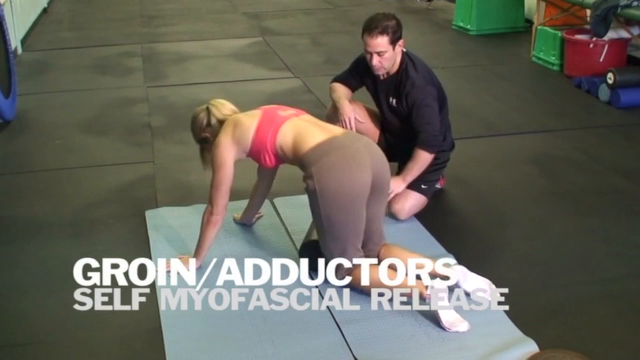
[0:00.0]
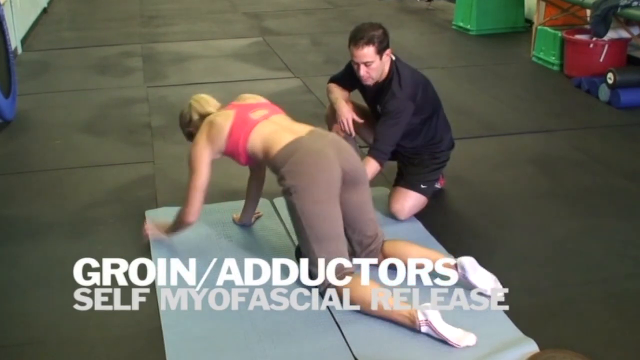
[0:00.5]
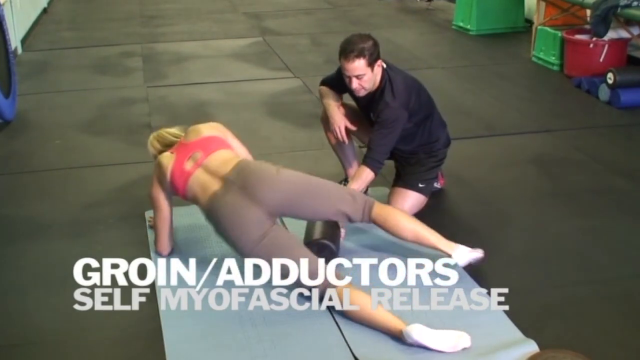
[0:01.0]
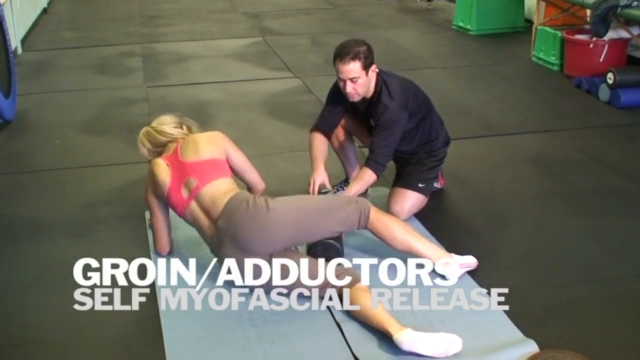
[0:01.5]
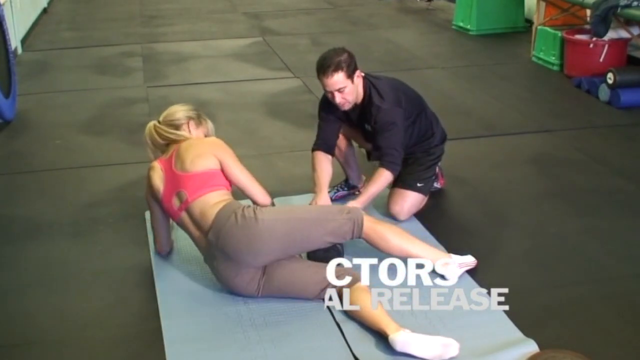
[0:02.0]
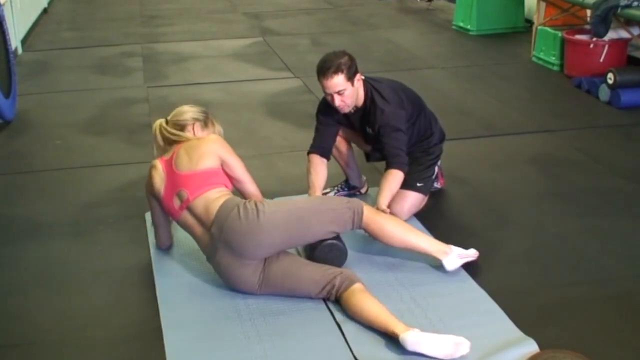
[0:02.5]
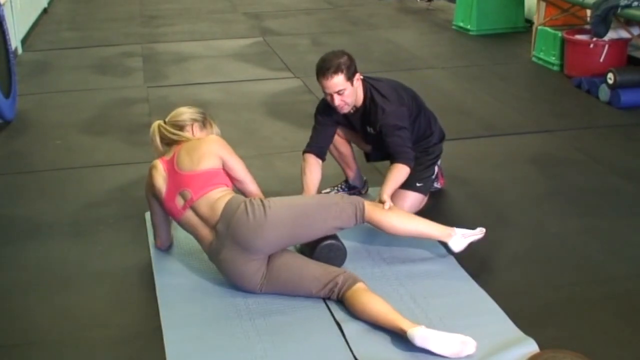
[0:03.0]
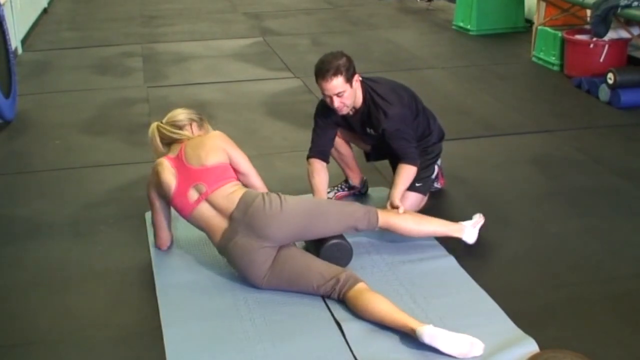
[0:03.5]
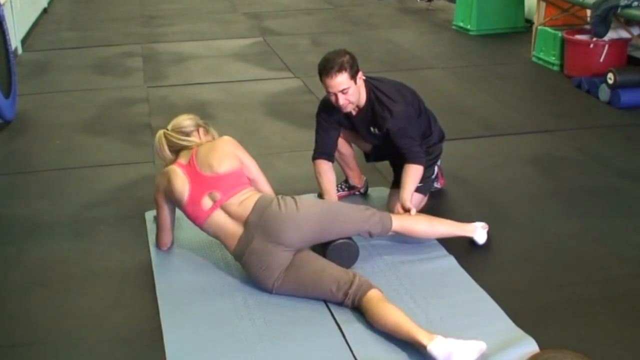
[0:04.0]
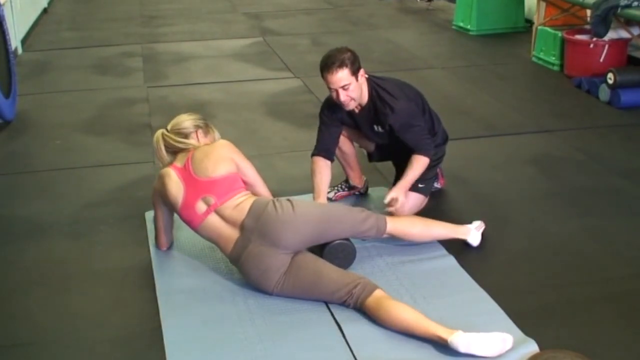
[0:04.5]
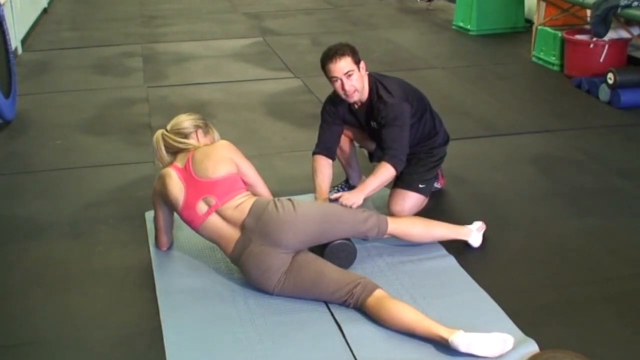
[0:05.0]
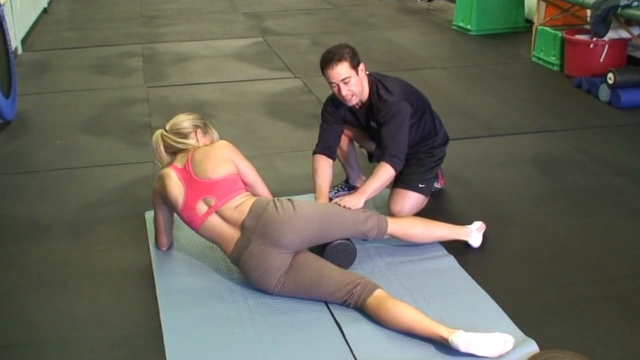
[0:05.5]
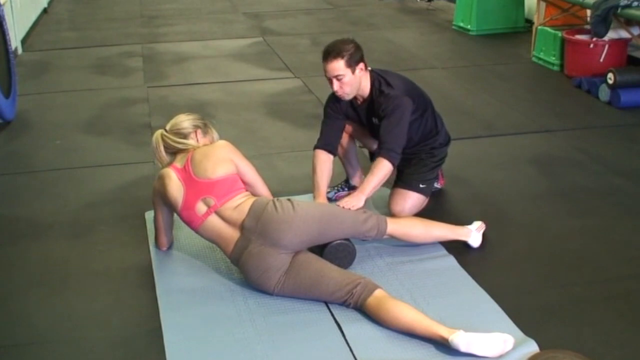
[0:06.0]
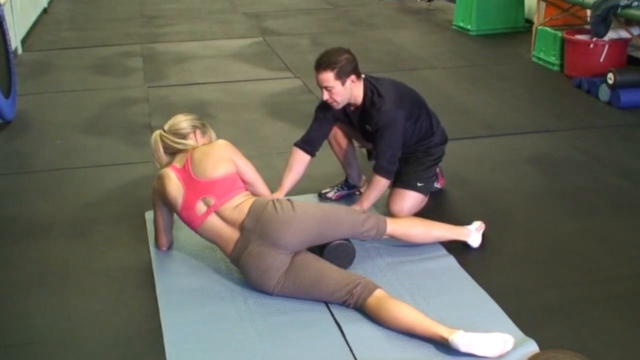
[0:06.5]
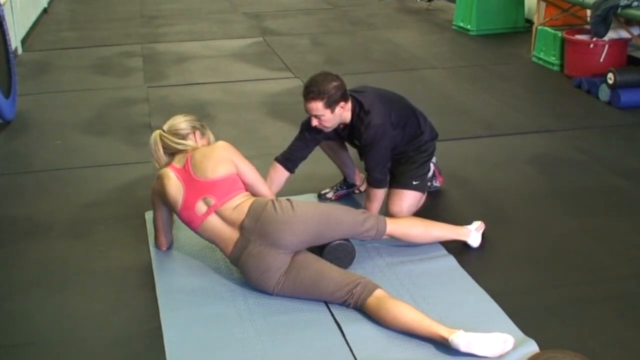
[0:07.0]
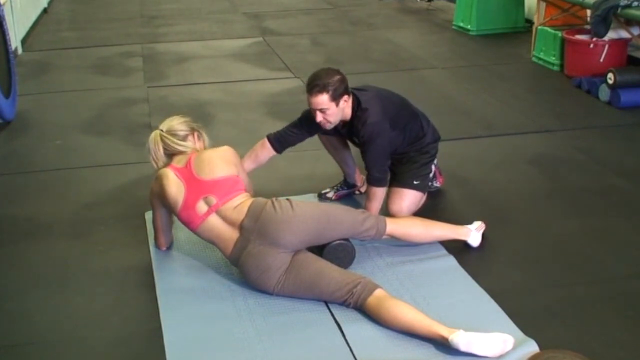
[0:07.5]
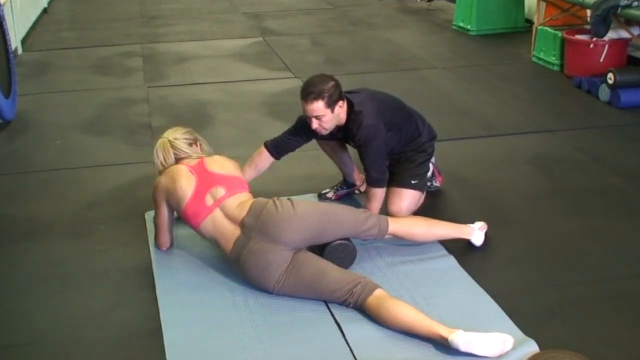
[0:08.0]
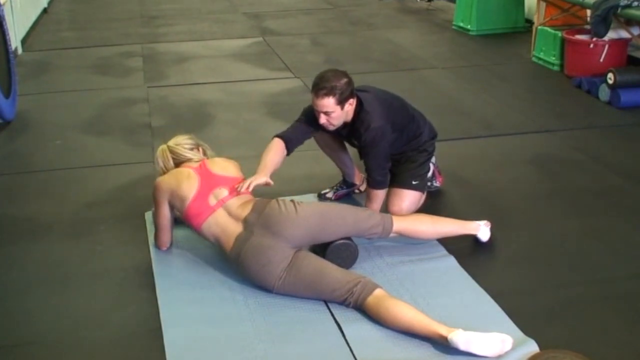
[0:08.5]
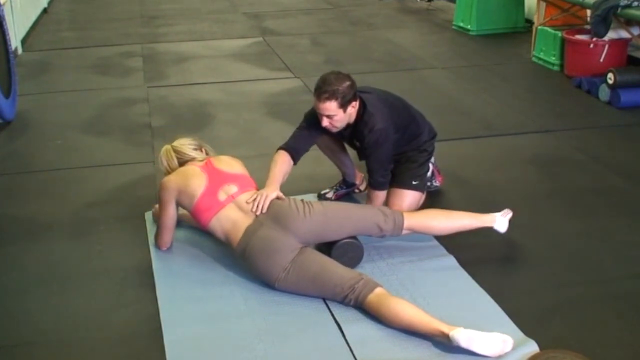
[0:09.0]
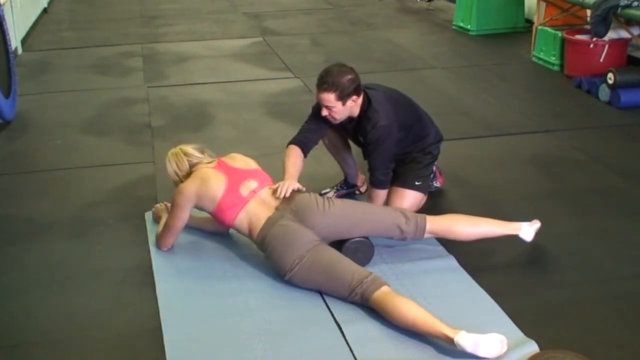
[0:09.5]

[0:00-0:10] A young woman wears light brown fawn pants and a candy pink exercise bra. To her right is a young man, possibly her personal trainer, a young white man with dark hair wearing black shorts and a black top. There is an exercise mat and what looks like a tiled floor, possibly safety tiles, and in the background there are some colourful boxes. In the far left corner there appears to be the base of a trampoline stand, and possibly a piece of exercise equipment with a blue surround and a black rubber inner that can be bounced on. The young woman turns to lie on her left side with her leg outstretched and her elbow bent and on the ground along with her forearm. A dumbbell is below her right thigh, and she makes some sort of movement there.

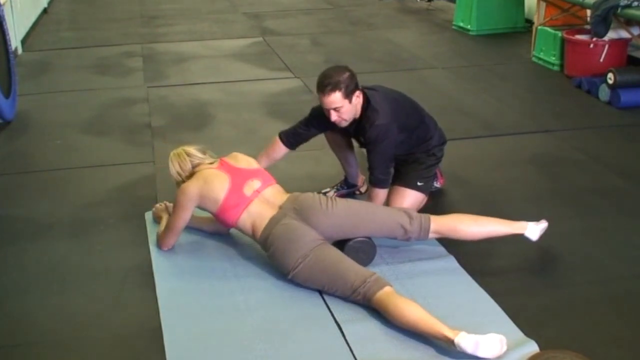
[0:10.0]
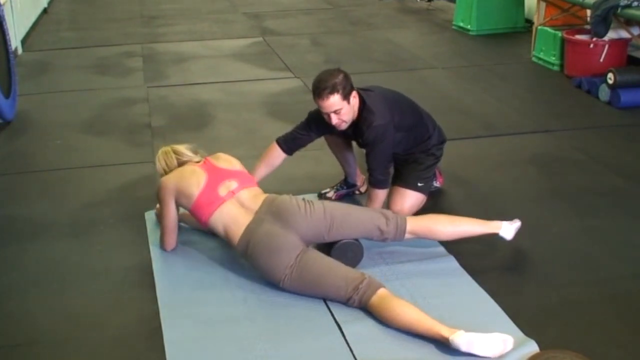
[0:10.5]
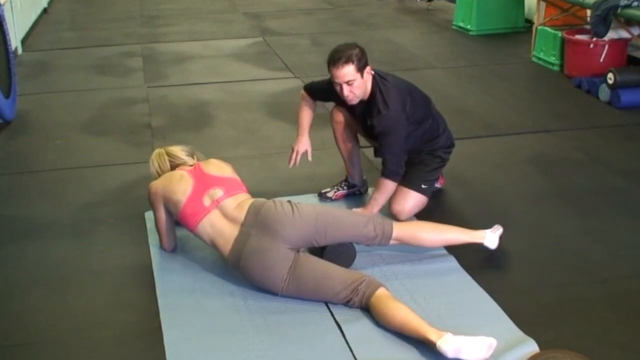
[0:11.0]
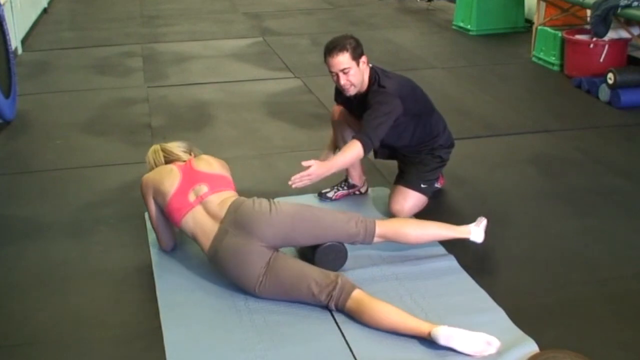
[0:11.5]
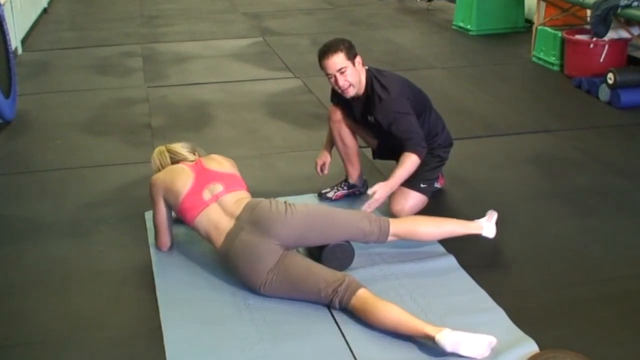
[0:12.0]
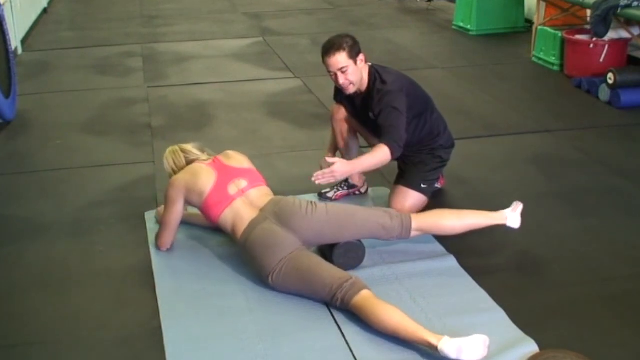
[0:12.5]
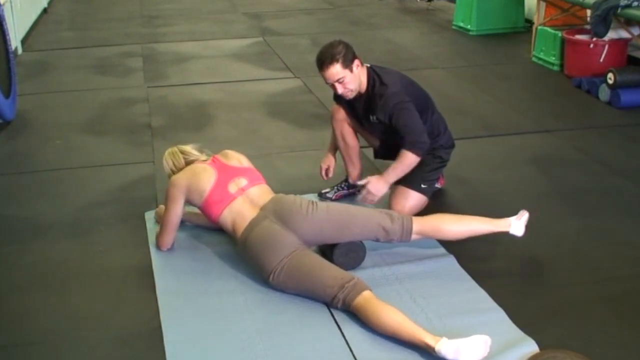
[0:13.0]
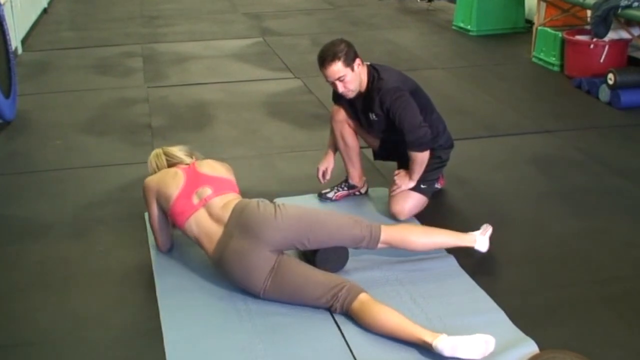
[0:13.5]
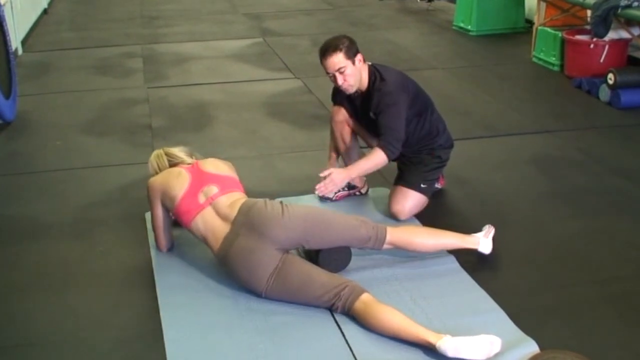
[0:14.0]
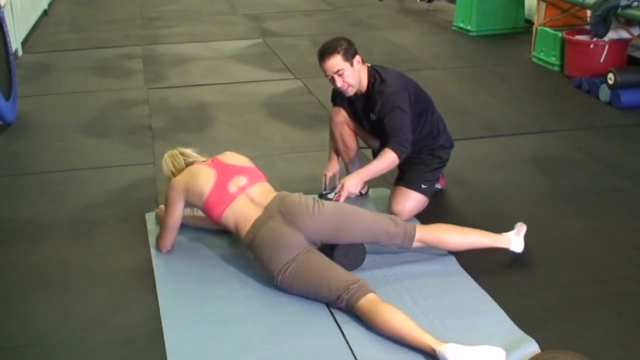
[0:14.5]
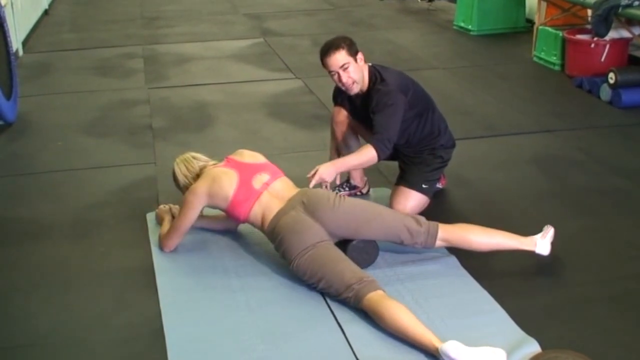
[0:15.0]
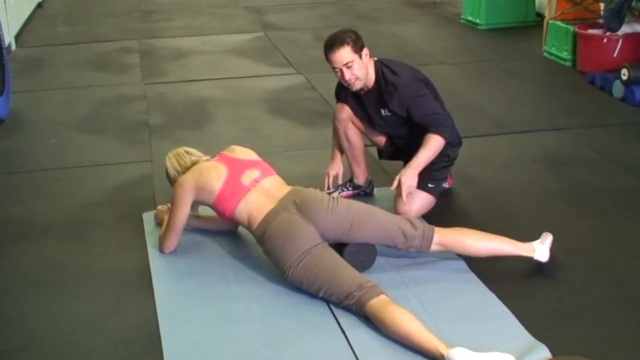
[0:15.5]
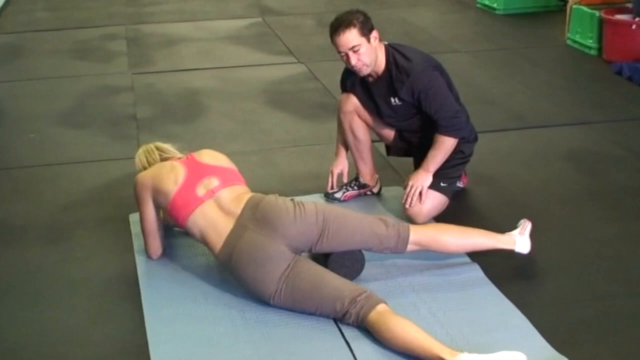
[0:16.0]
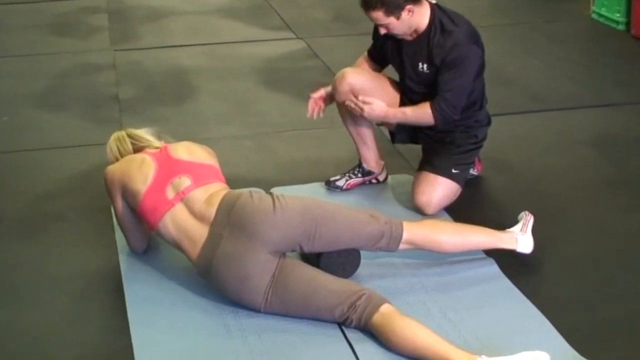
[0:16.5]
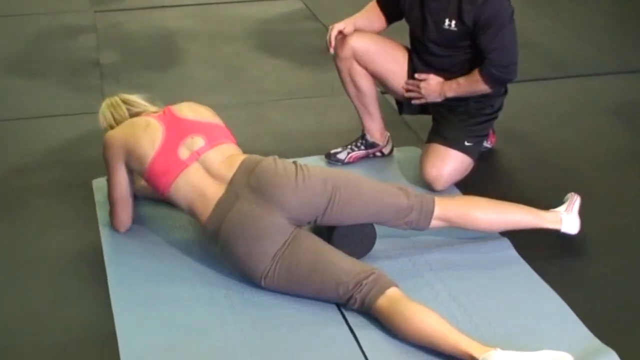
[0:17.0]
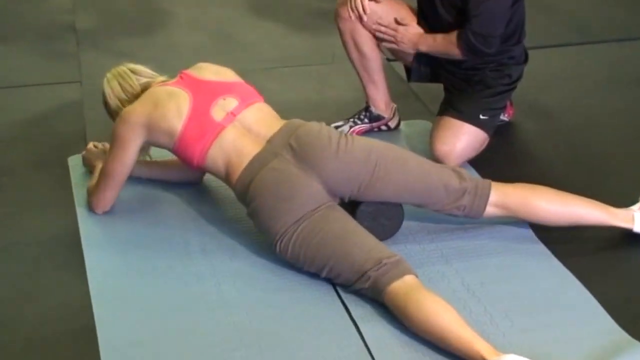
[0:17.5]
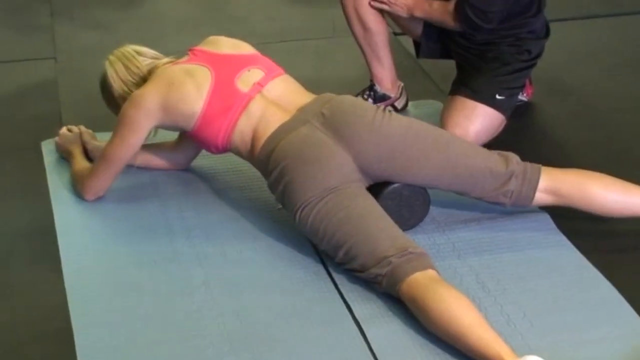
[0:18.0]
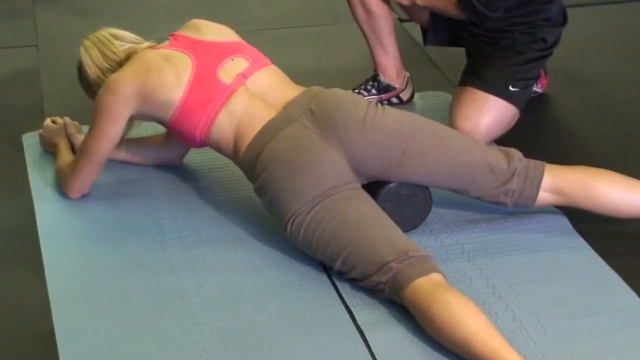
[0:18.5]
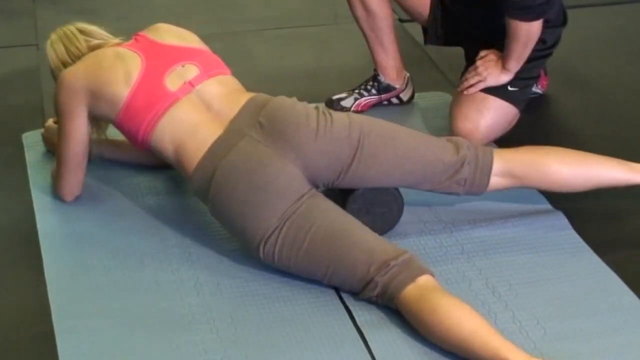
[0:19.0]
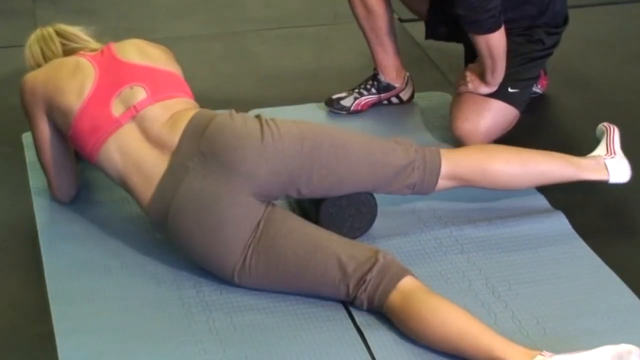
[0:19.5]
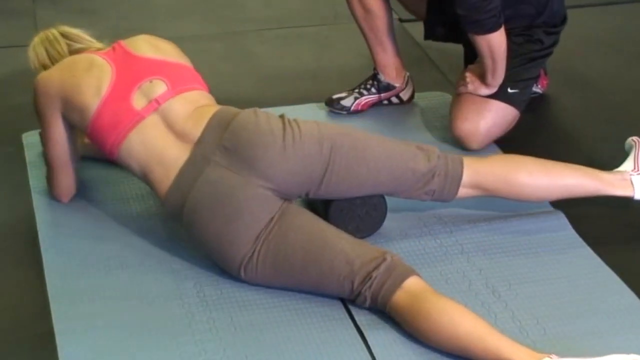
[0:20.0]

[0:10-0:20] The woman moves somewhat awkwardly, moving her leg towards the edge of the screen so that her foot keeps disappearing on the right side as the camera closes in slightly. The young man tries to explain something by pointing to the outside of his right thigh and then to the inside of his own thigh. She looks uncomfortable; she has both elbows on the ground and propels herself using them, her legs and the dumbbell.